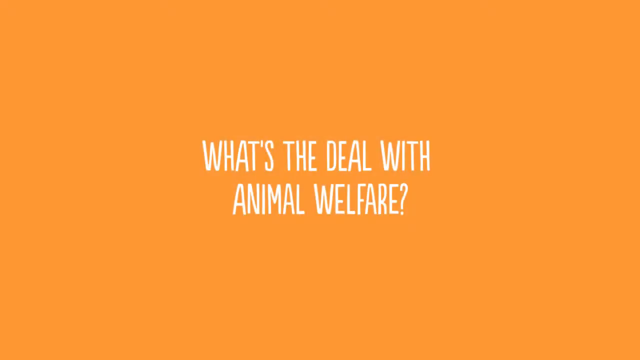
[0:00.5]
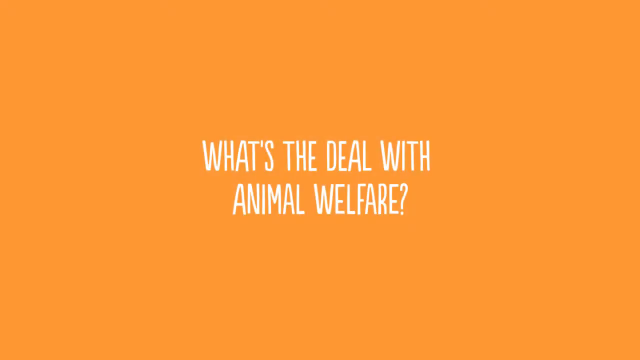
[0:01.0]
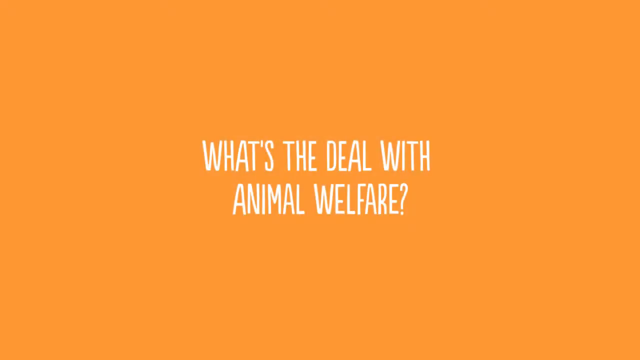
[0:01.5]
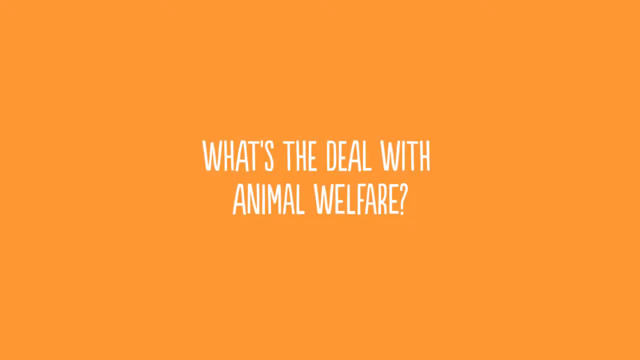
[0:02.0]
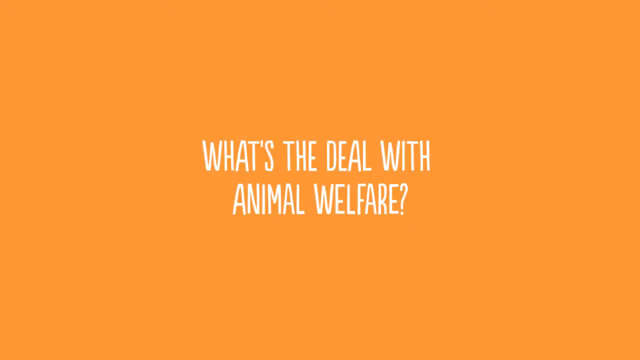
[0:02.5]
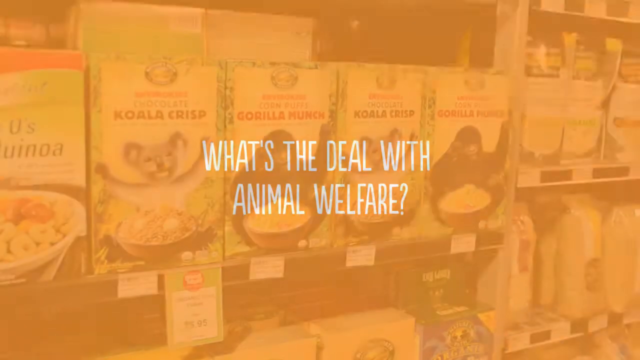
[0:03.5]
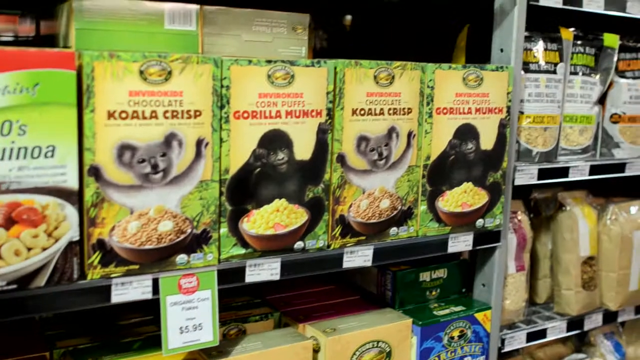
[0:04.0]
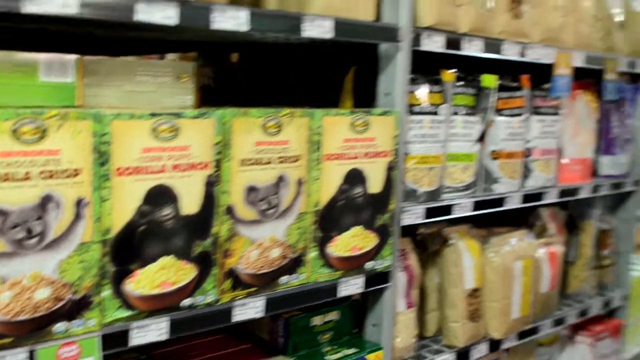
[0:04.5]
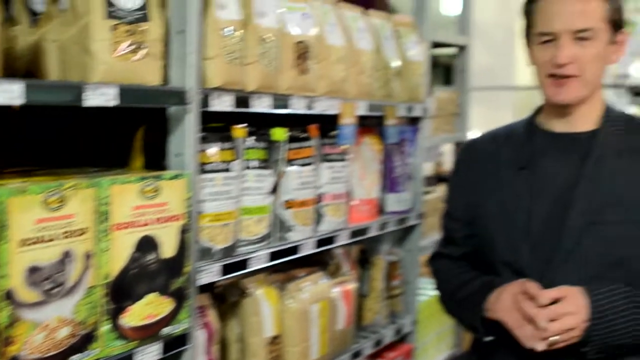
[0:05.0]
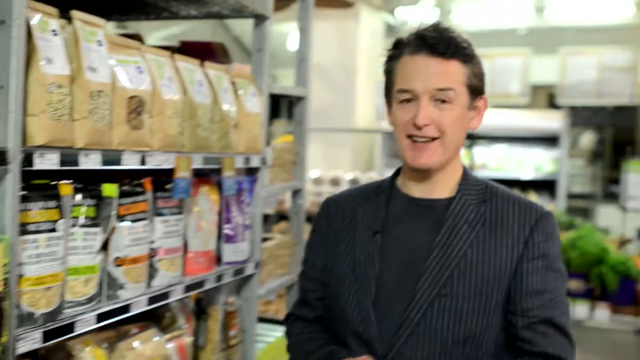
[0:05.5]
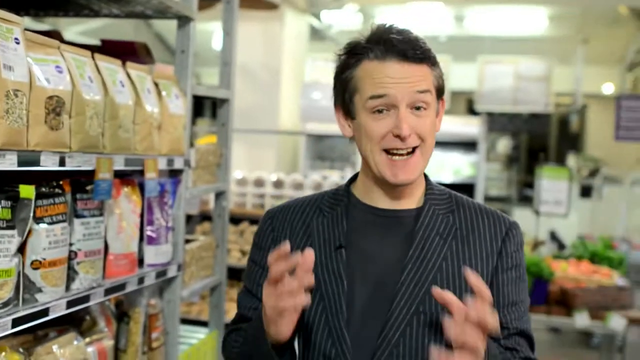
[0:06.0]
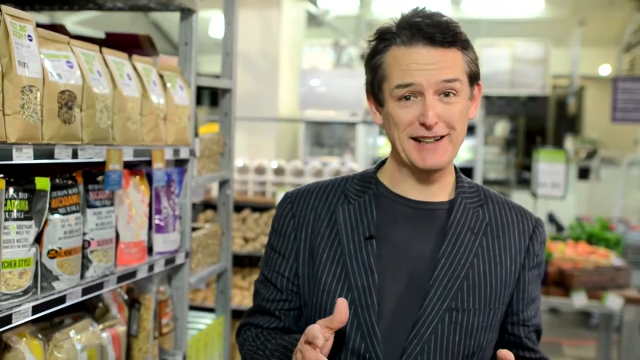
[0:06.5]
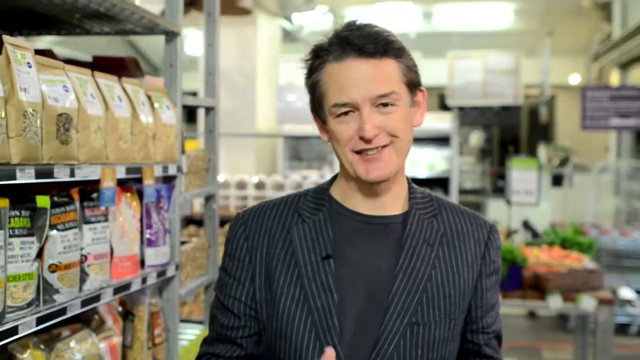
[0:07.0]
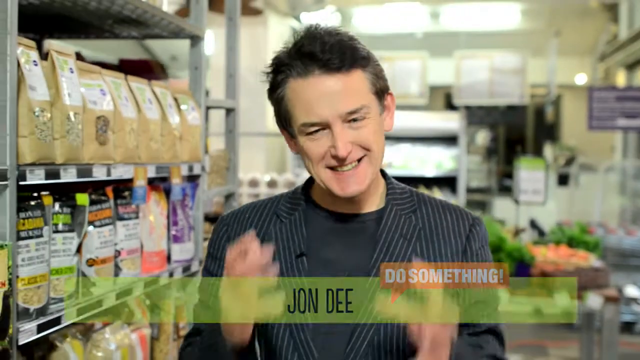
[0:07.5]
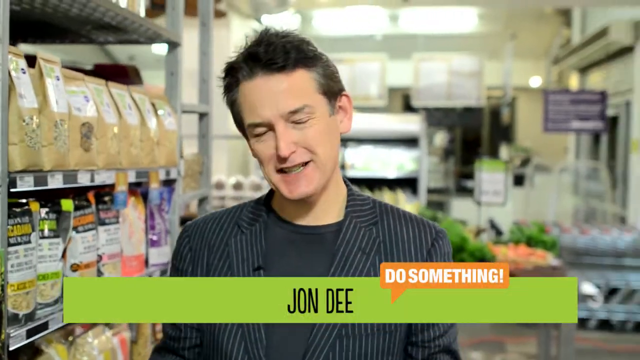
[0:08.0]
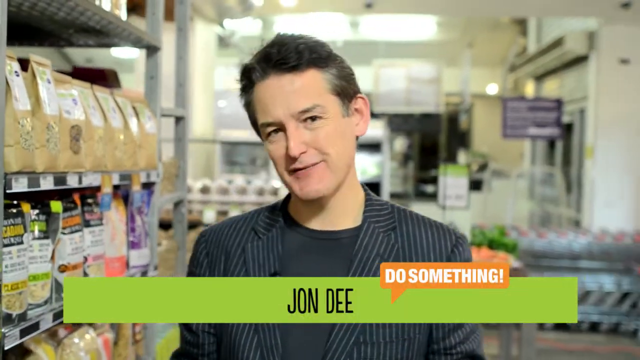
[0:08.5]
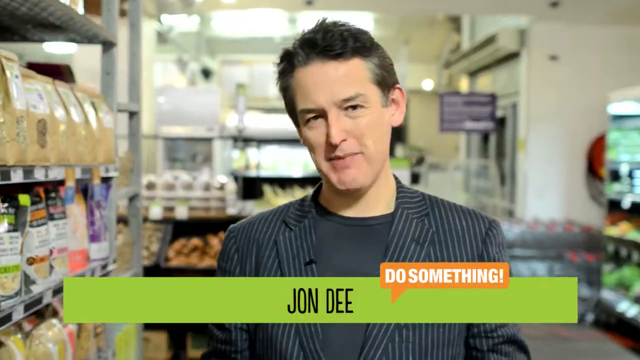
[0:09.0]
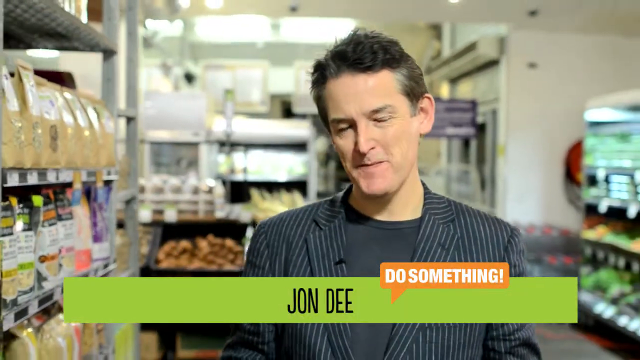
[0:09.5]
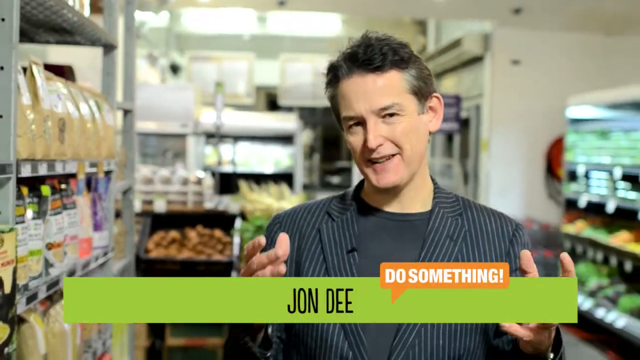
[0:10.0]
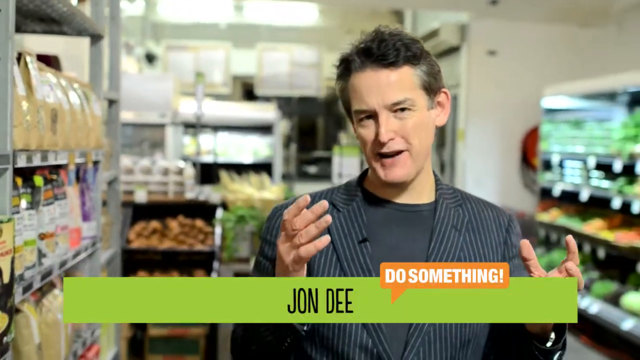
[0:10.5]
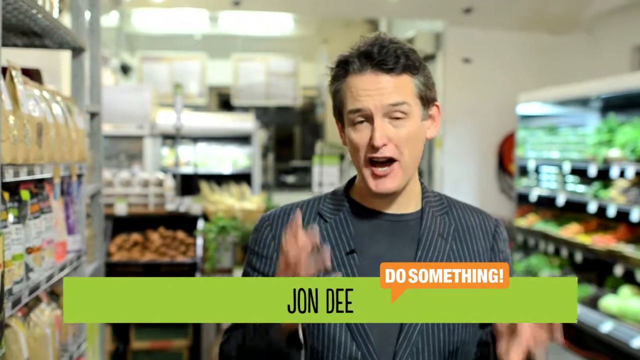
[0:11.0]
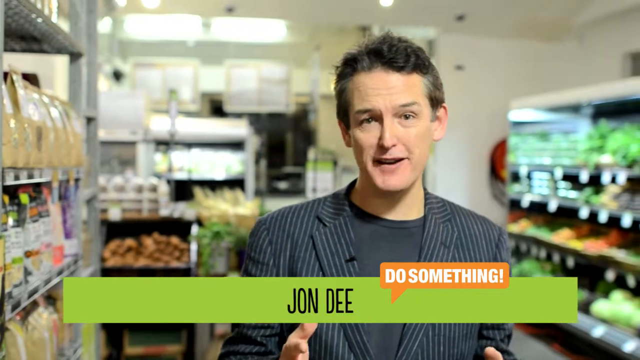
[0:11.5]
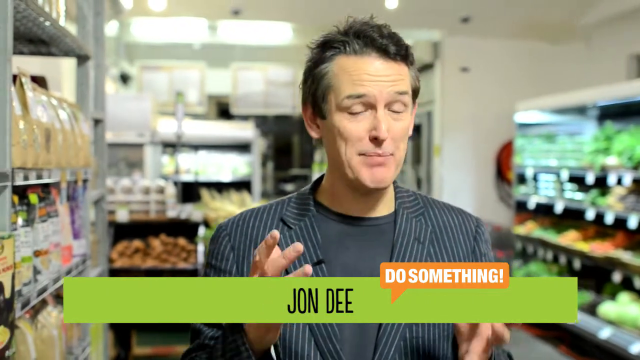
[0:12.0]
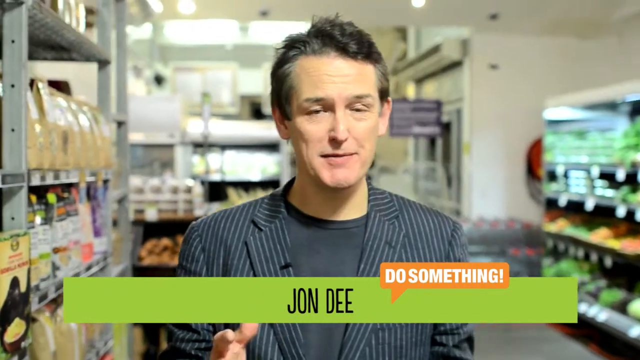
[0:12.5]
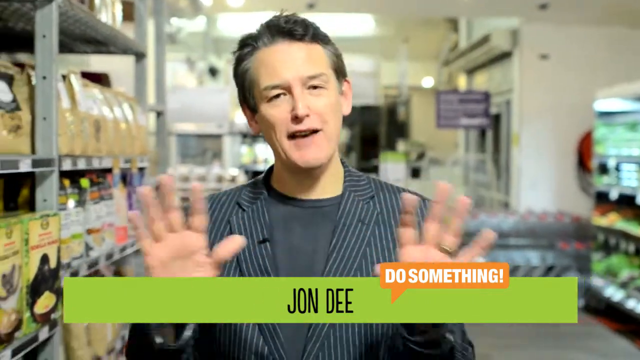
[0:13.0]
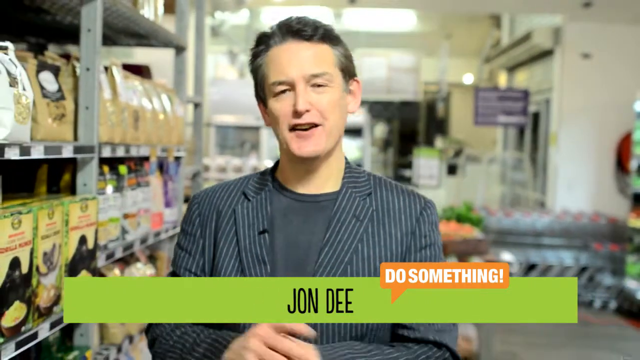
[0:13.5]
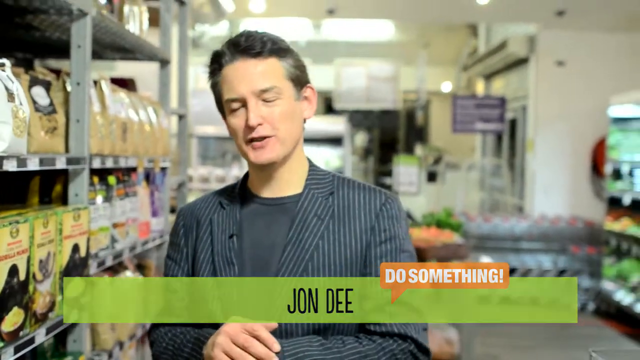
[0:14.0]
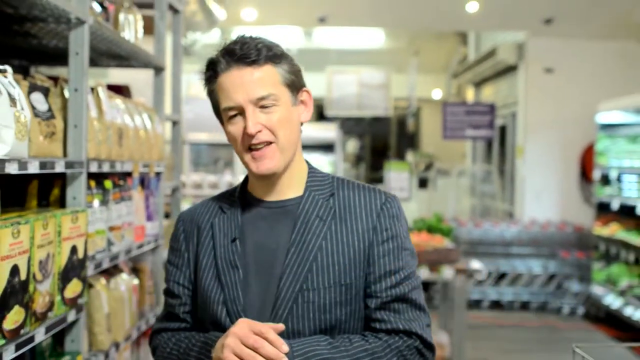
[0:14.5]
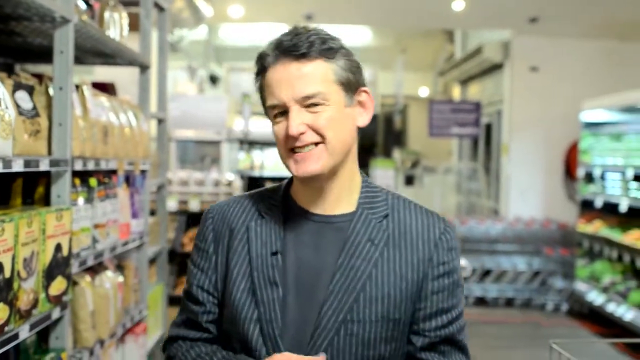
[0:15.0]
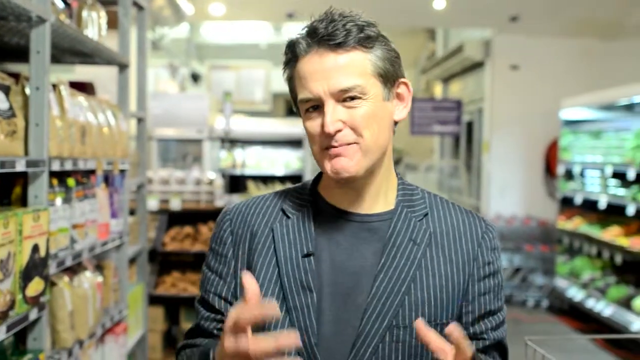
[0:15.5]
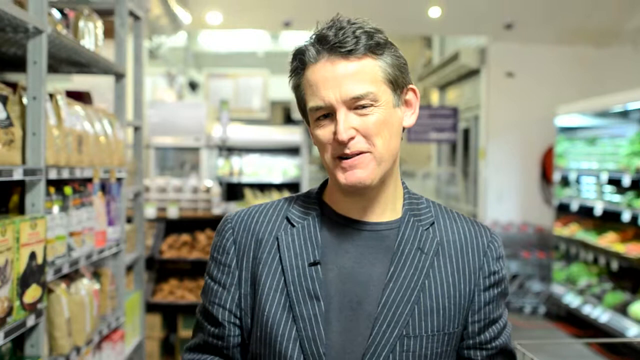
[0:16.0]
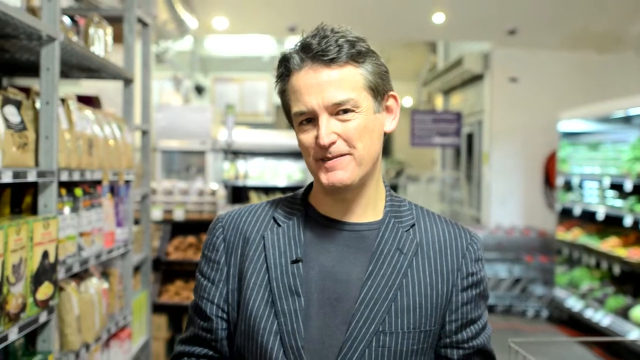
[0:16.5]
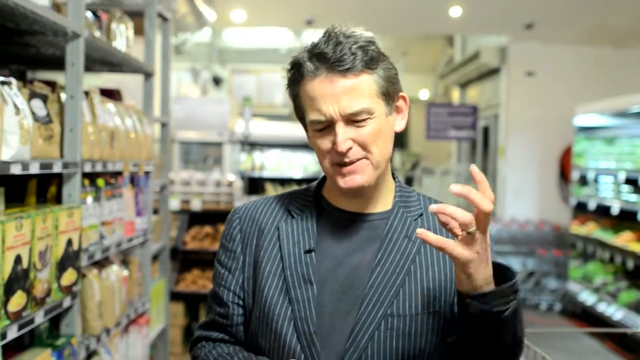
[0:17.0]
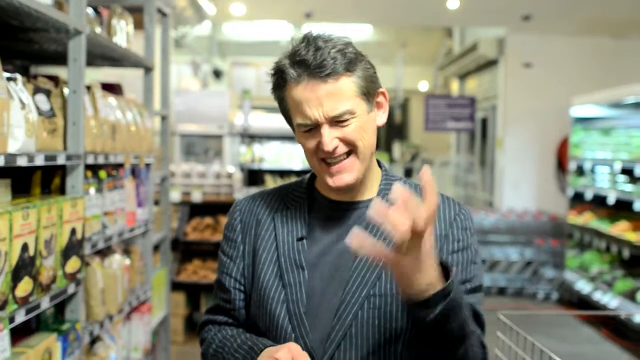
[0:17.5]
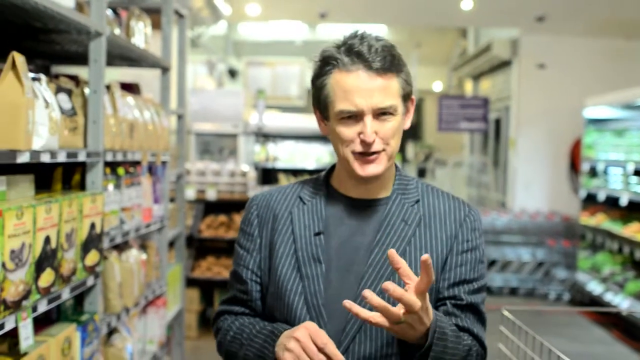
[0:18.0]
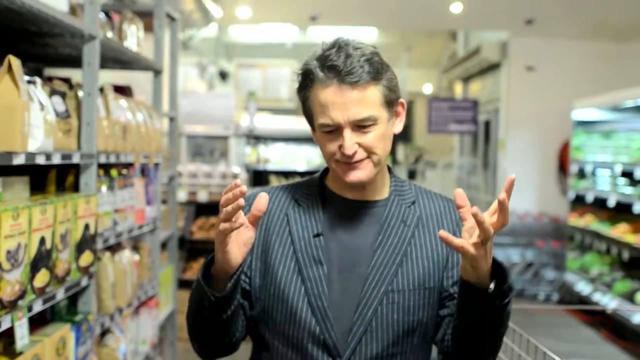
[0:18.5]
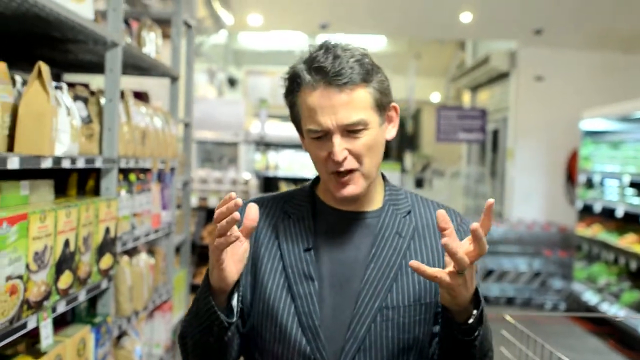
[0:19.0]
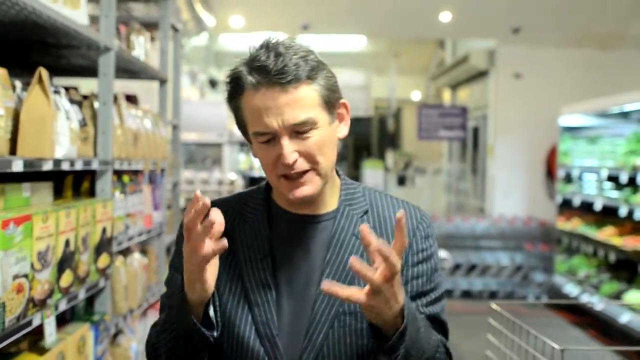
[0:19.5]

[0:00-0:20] An orange background appears, and the words "what's the deal with animal welfare" fade in, written in a white font. The screen then transitions to a grocery store shelf with products on it, including chocolate koala crisp, corn puffs gorilla munch, then chocolate koala crisp again and corn puffs gorilla munch again. To the left of those there appears to be a cereal. The camera then shifts to the right to show the host, who wears a black and white striped blazer and a black shirt. His name, "John D.", is written in black on a green banner, and next to it is an orange speech bubble with white words that say "Do Something". John D. moves forward through an aisle, making hand motions.